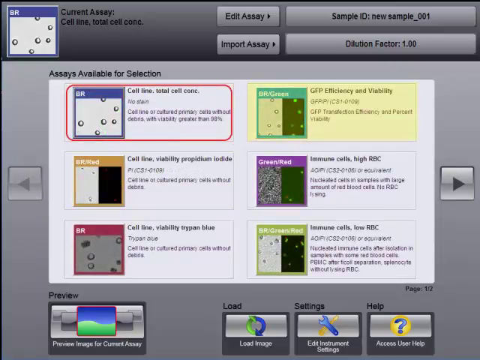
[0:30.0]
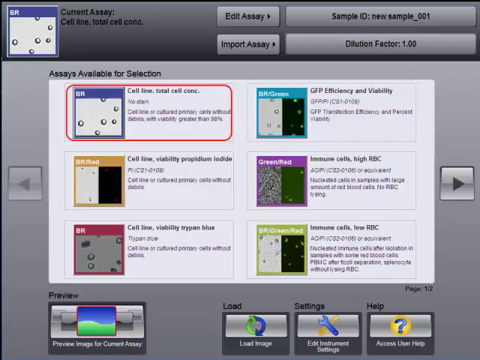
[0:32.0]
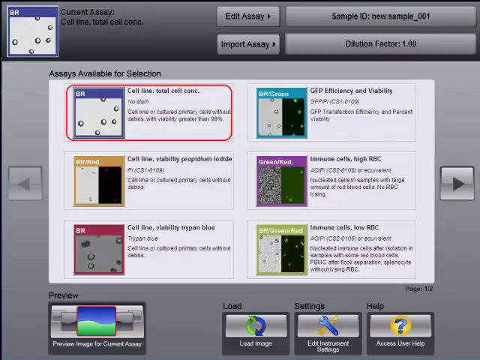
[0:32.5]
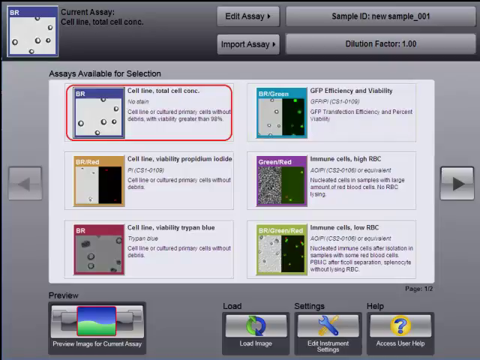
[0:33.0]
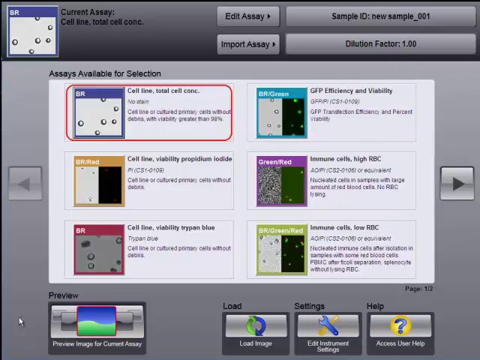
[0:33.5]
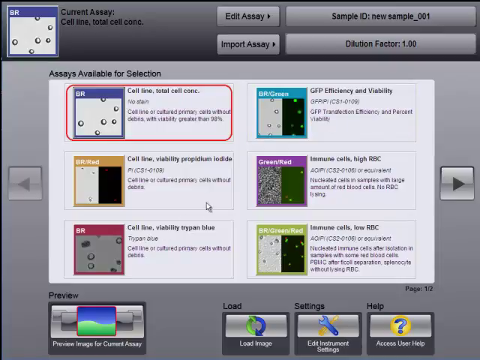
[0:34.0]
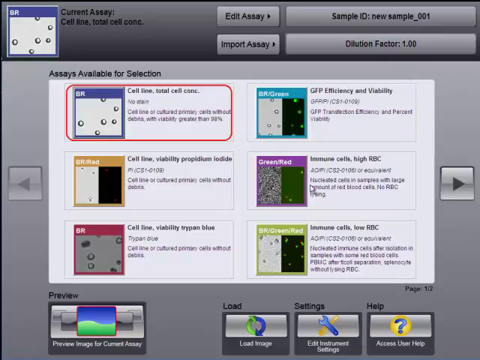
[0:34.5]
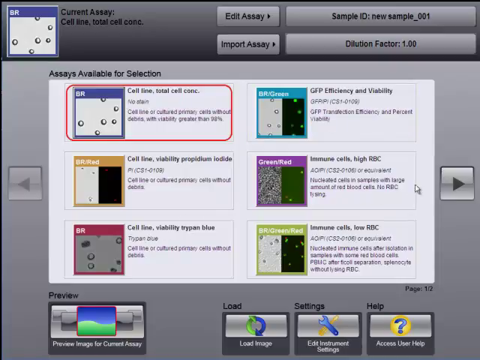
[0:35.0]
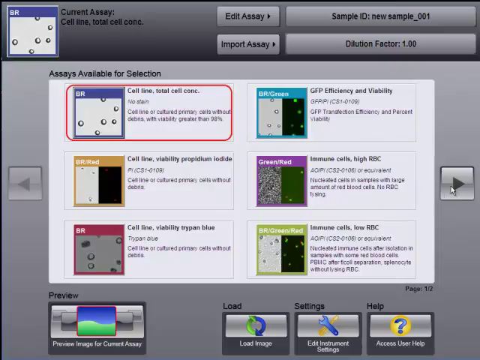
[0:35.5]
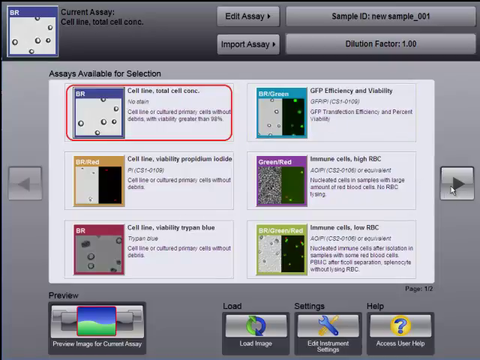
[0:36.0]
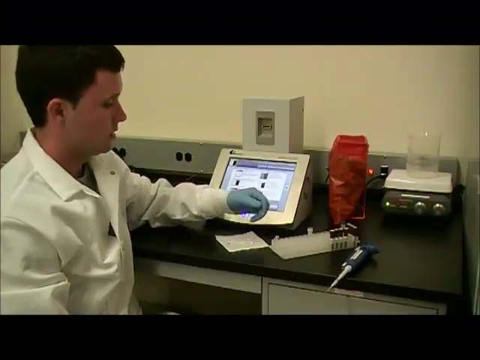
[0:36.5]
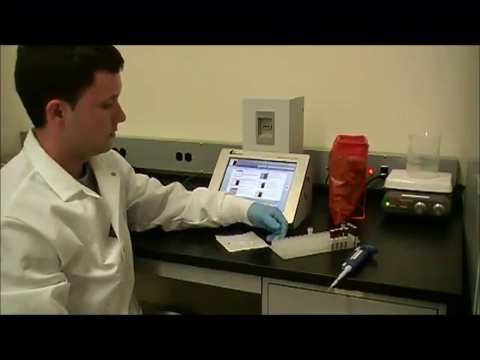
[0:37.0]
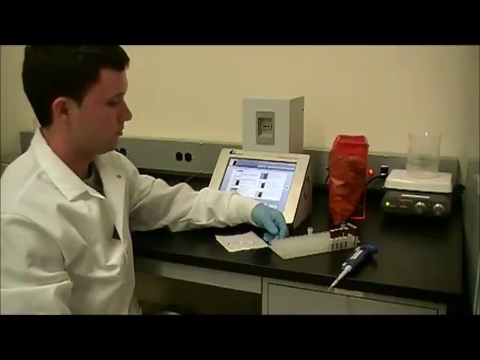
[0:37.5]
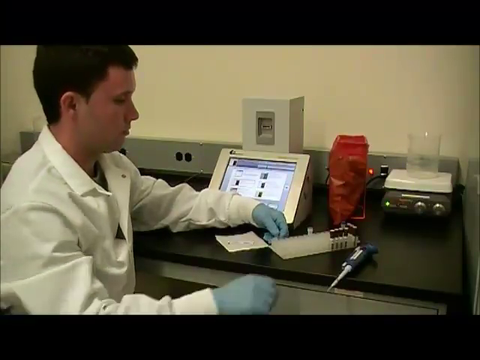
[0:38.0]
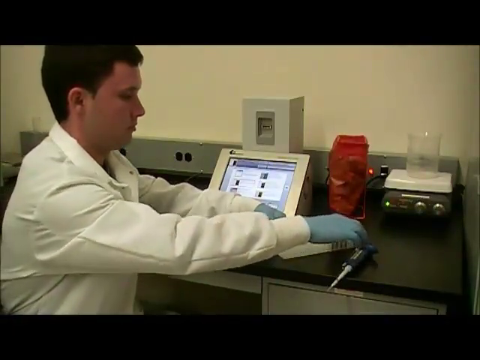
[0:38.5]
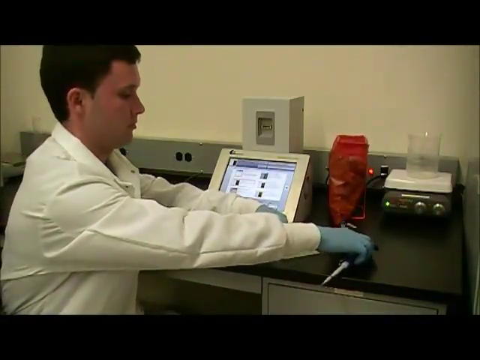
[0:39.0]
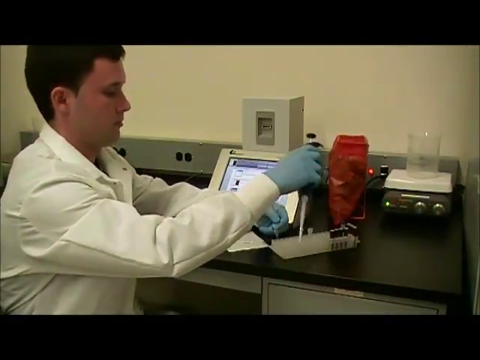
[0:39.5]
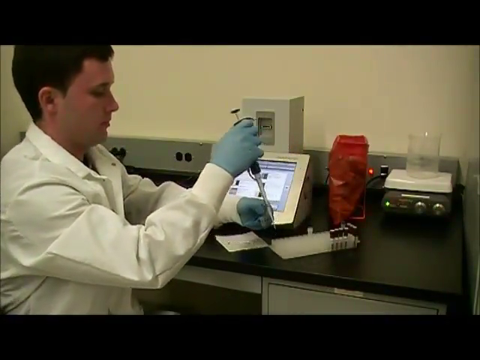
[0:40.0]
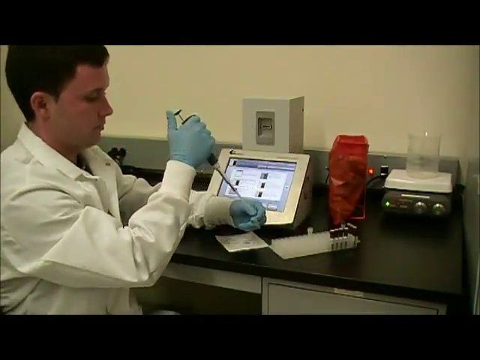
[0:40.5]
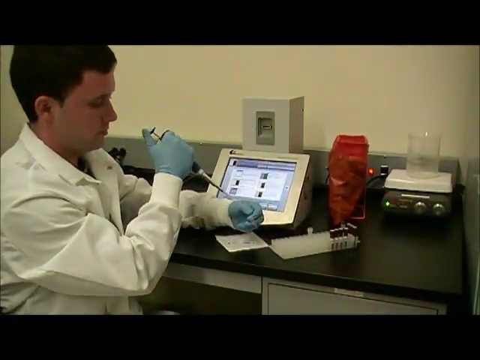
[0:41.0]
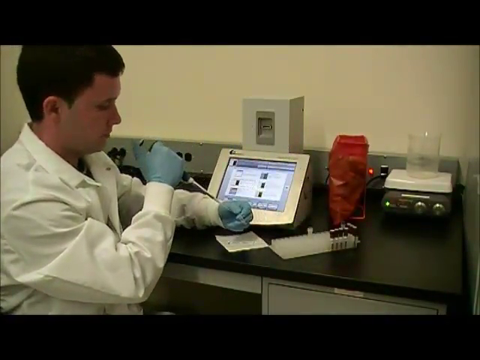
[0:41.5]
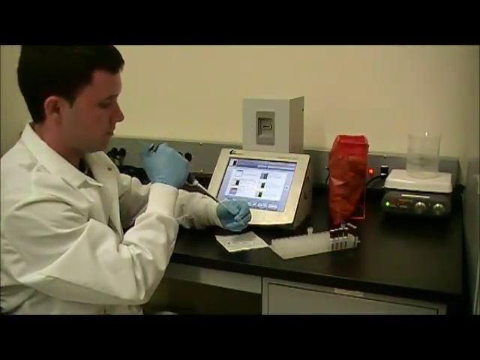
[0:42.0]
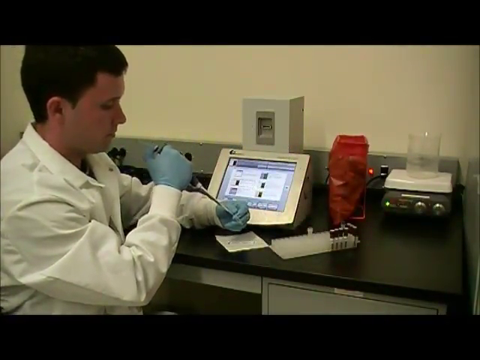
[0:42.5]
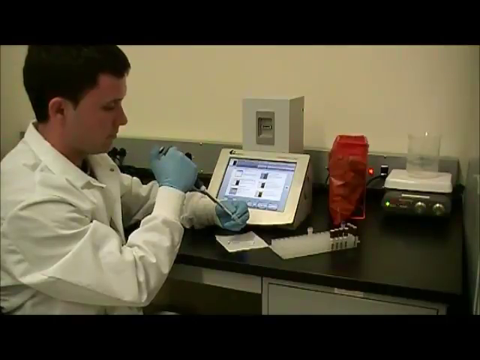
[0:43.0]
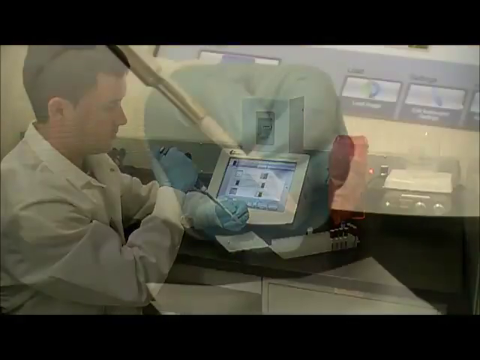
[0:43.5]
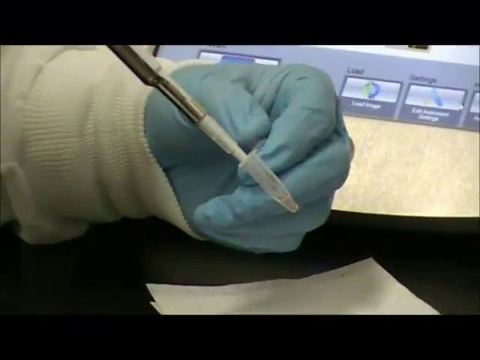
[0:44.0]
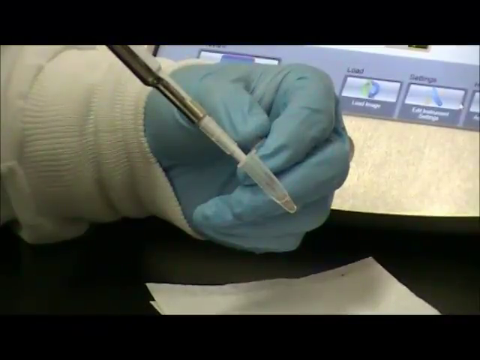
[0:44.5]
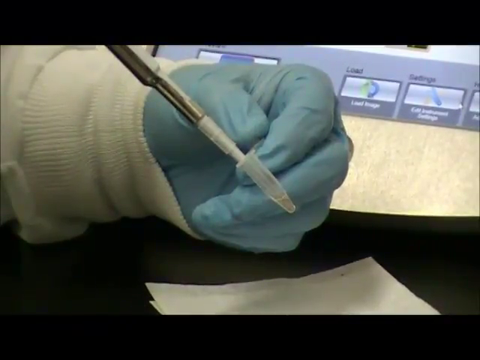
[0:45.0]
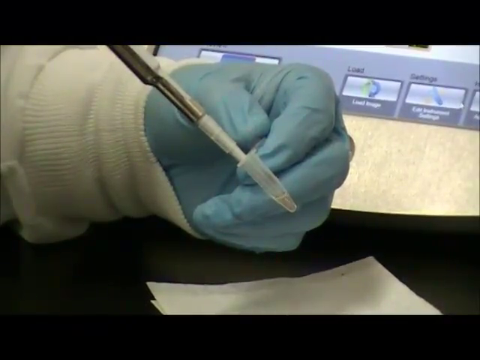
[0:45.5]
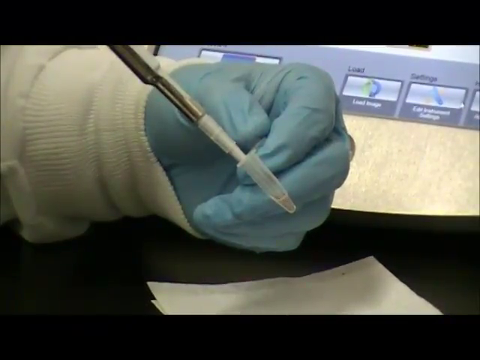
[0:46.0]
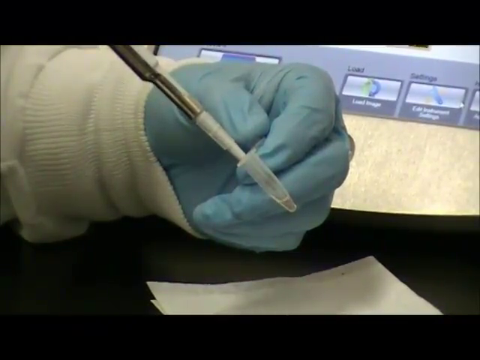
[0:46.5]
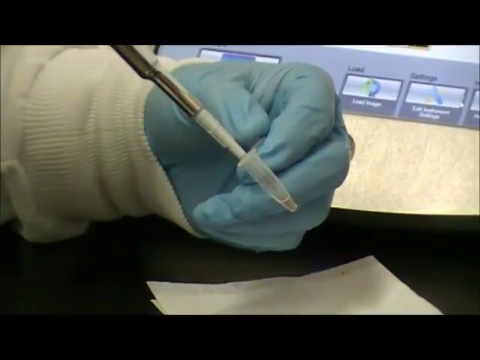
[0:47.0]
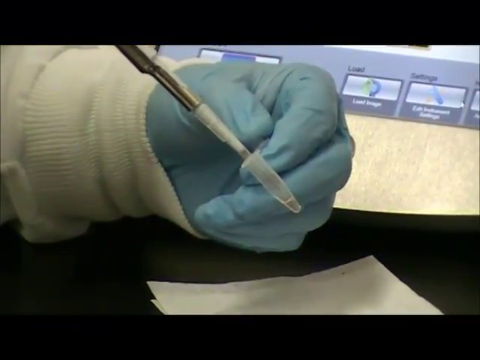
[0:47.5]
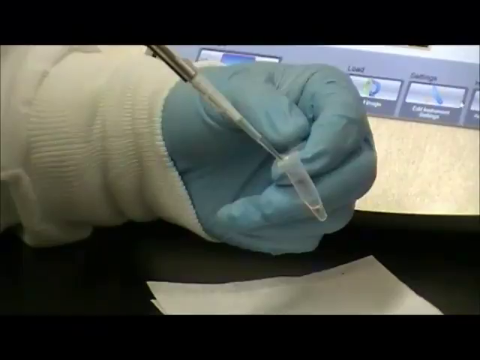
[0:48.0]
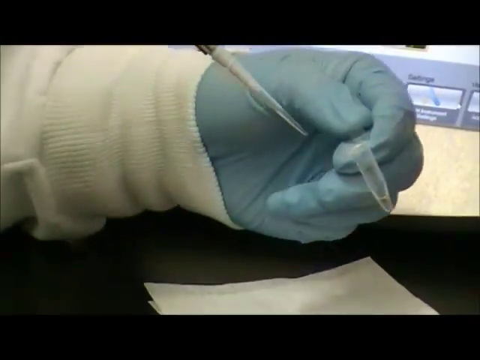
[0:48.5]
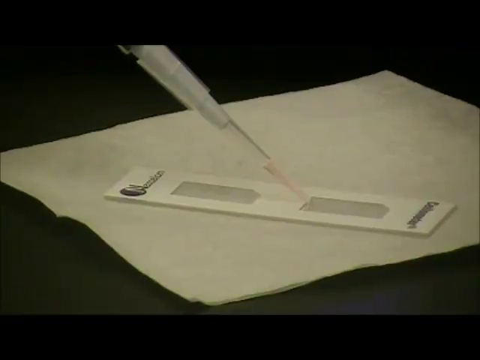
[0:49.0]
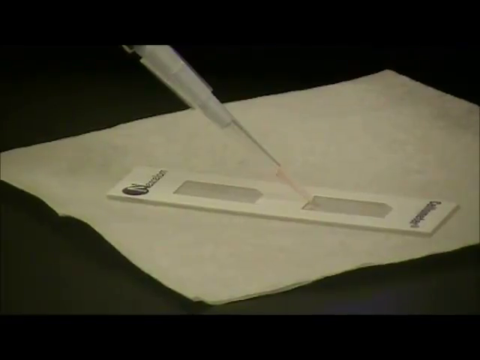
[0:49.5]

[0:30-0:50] The screen of assays available for cellometer selection continues; it is mostly gray, with some red, gold and white highlighted areas. A mouse cursor moves across the screen, and then the image changes to video of a lab technician: a young man about 25 years old with short black hair, wearing a white lab coat and turquoise gloves. He is sitting on the left side of an onyx-colored desk, and the cellometer screen is positioned in the exact center of the image. He reaches forward with his gloved hands to grab something off the table. The table is off-white and black, and there is a yellow wall behind him. The video is letterboxed, with black bars at the top and bottom. The man picks up a plunger about 11 inches long, holds it up with his right thumb, positions the device with his left hand, and adds the plunger to a small plastic receptacle, now shown in close-up, with his left hand holding the receptacle at the end of the plunger. It is unclear whether he is removing or adding liquids; he seems to remove it and then adds it to a tester.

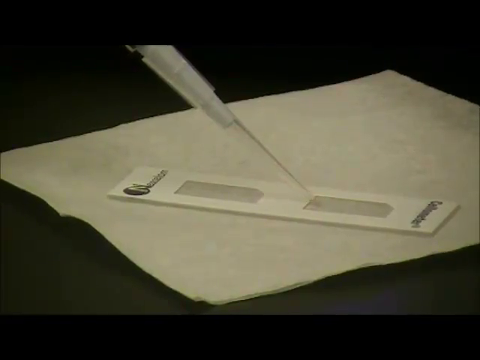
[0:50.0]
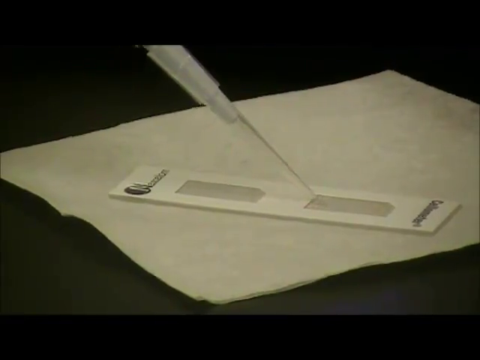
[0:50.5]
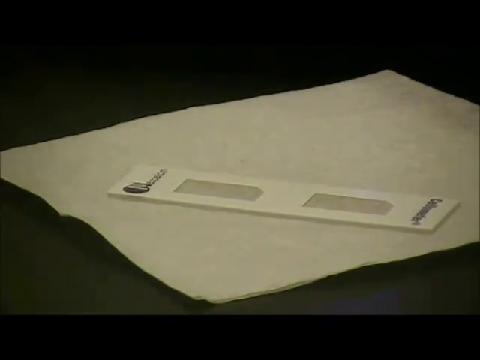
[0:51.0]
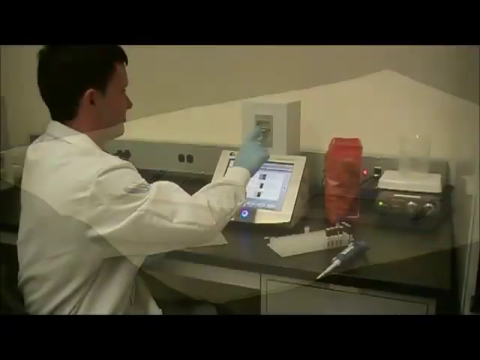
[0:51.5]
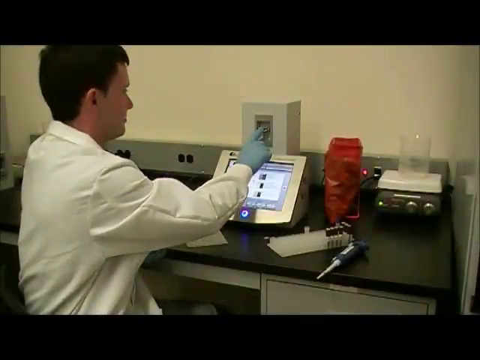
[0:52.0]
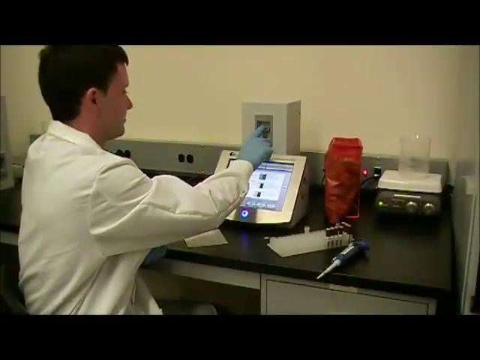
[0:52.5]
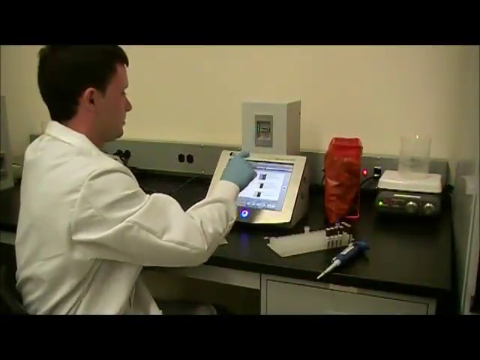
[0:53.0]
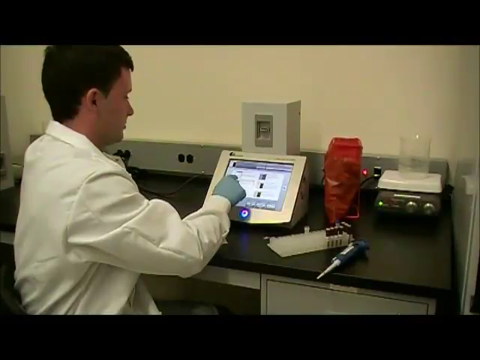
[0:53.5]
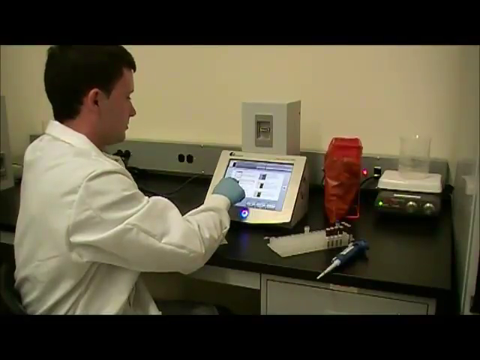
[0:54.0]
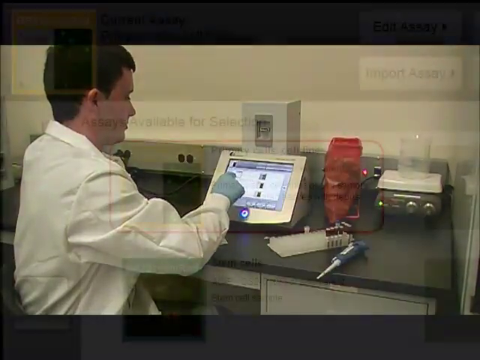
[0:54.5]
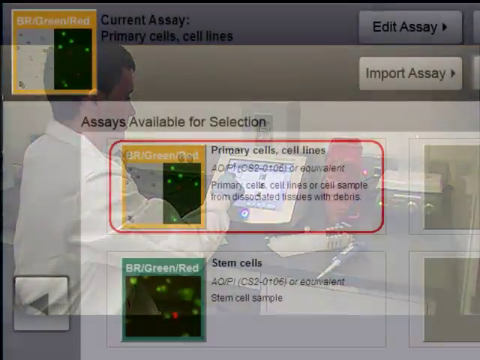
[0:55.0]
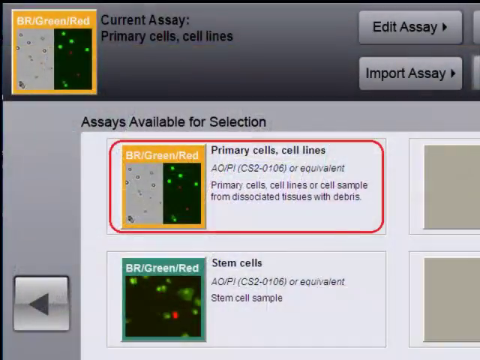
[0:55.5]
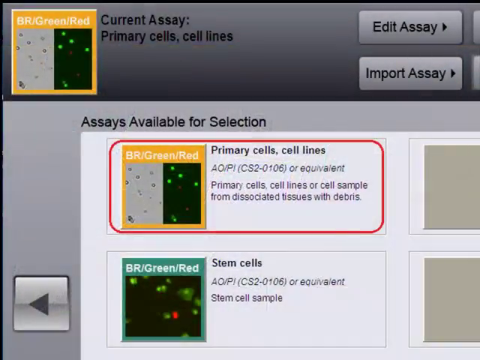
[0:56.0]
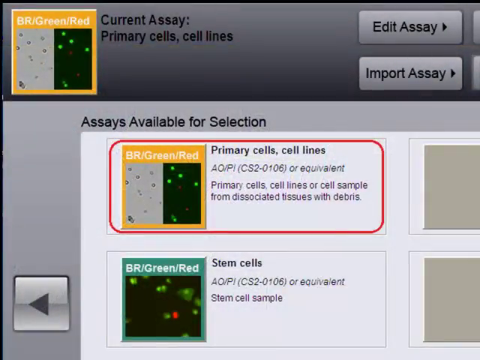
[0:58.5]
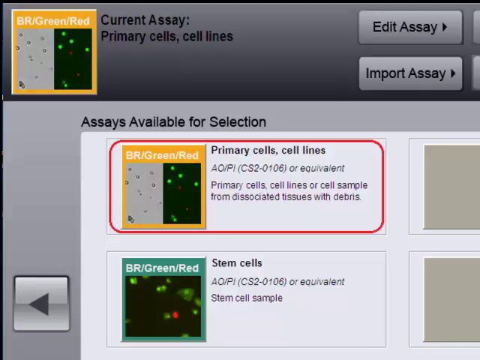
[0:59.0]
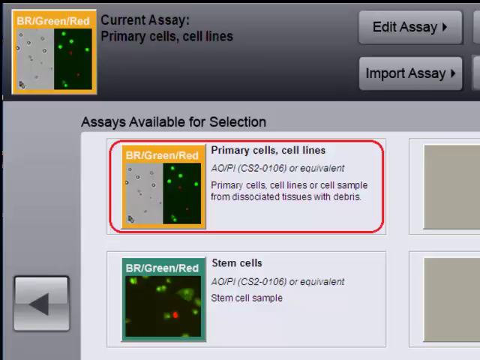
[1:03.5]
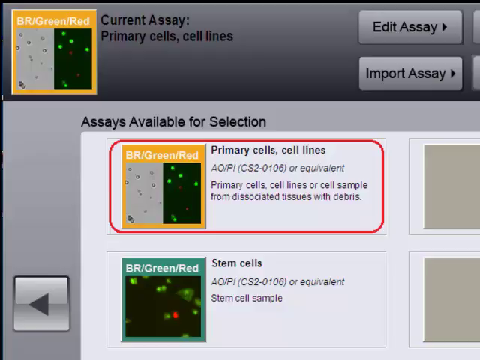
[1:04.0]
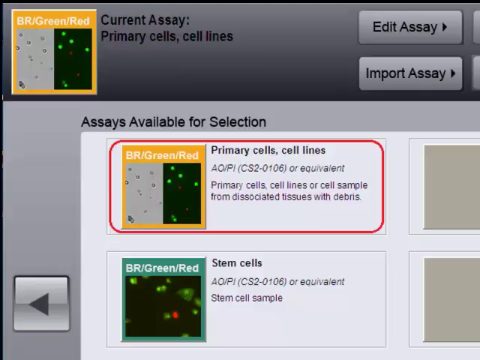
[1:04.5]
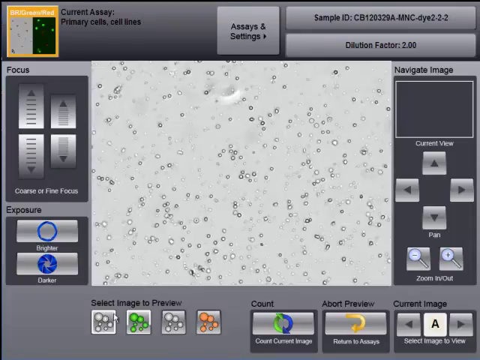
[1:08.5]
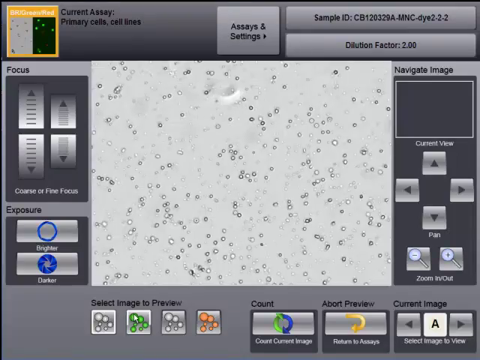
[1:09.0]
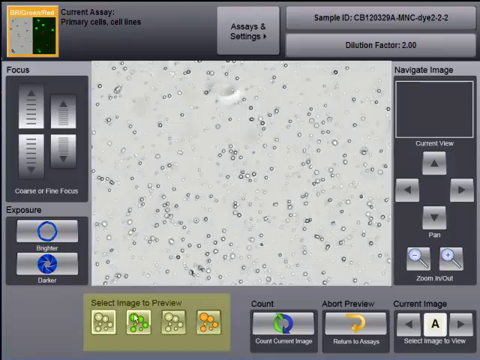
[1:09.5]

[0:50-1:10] The lab technician adds liquids to a test strip, then inserts the test strip into a receptacle above the screen of the cellometer (C-E-L-L-O-M-E-T-E-R). He then chooses an assay from the cellometer's screen, one for primary cells and cell lines; text reads "primary cells, cell lines, or cell sample from disassociated tissues with debris". In close-up, that choice is highlighted with a red outline. The screen then briefly changes to a magnified image of individual cells arranged in a matrix across a rectangle.